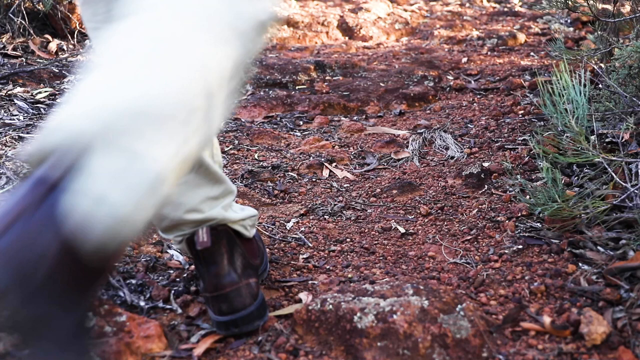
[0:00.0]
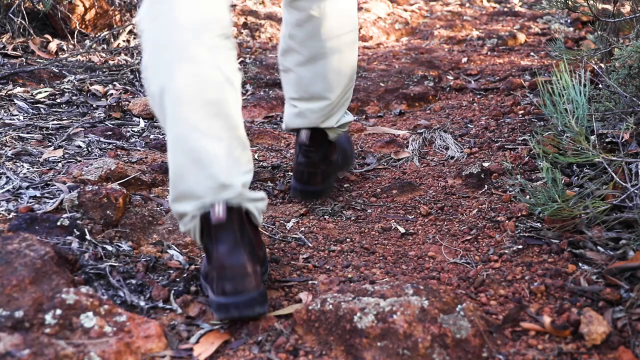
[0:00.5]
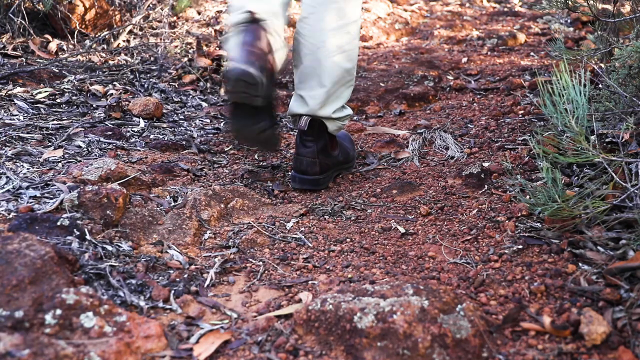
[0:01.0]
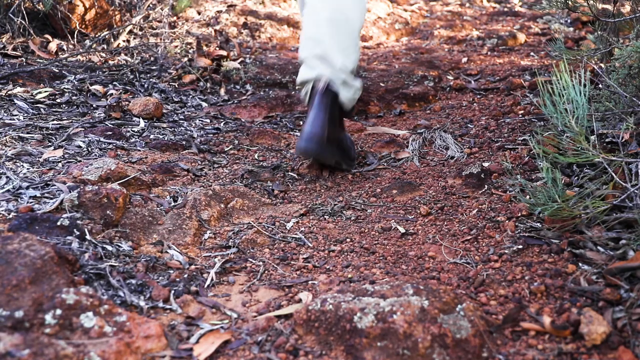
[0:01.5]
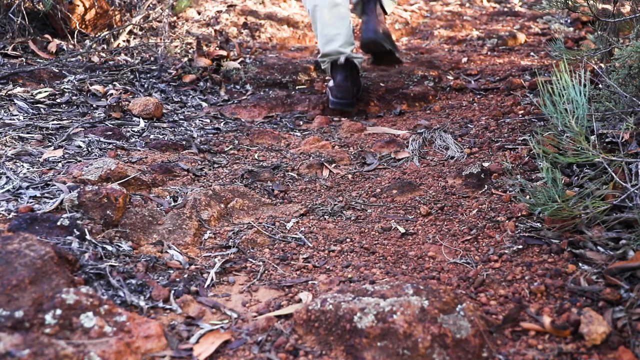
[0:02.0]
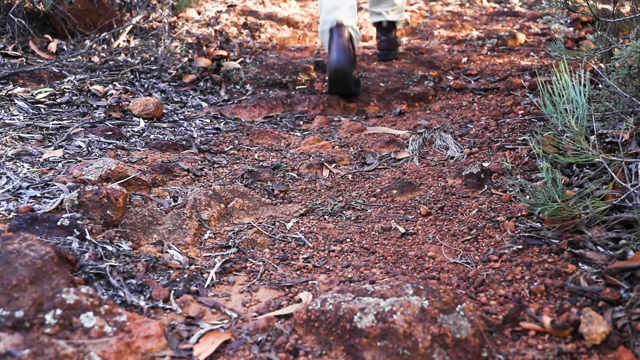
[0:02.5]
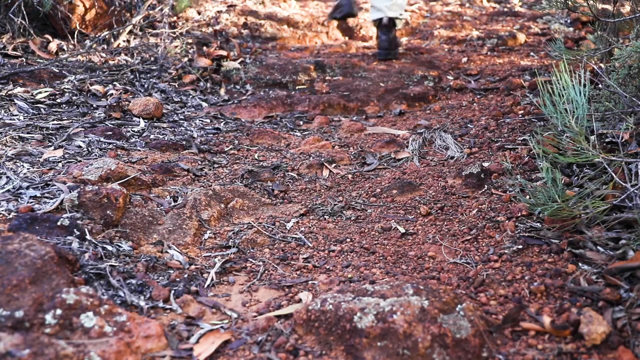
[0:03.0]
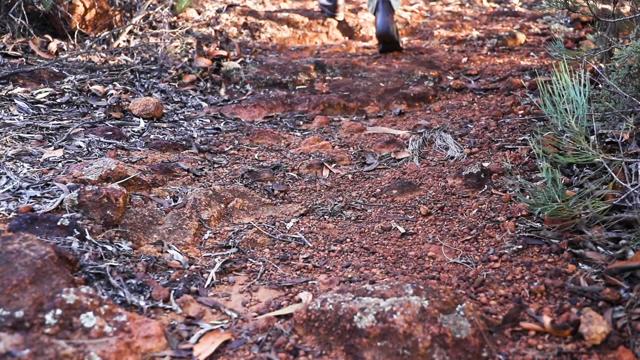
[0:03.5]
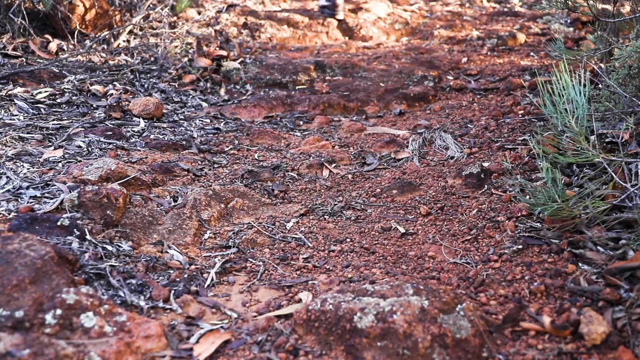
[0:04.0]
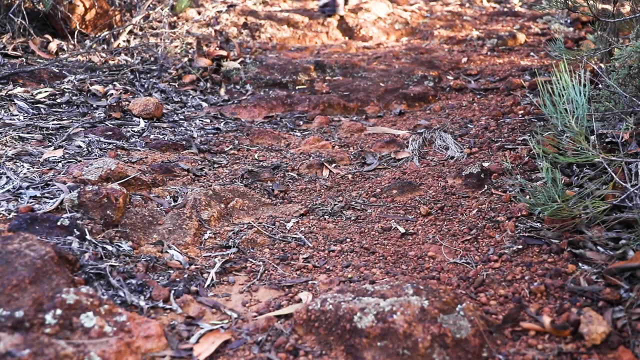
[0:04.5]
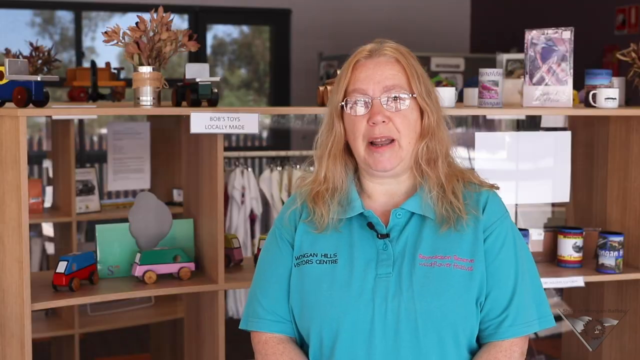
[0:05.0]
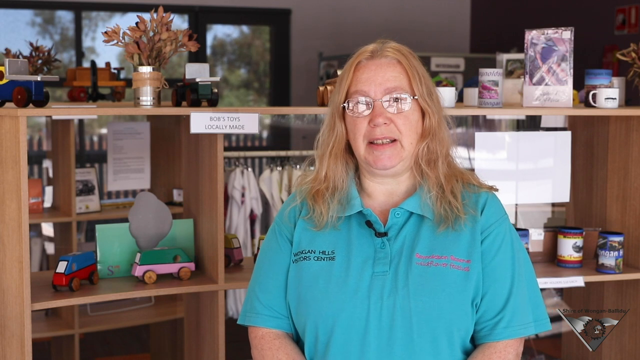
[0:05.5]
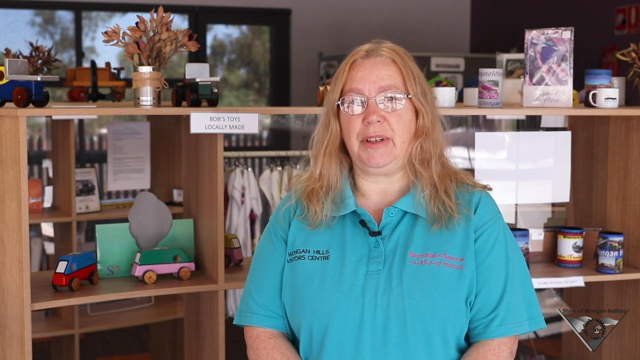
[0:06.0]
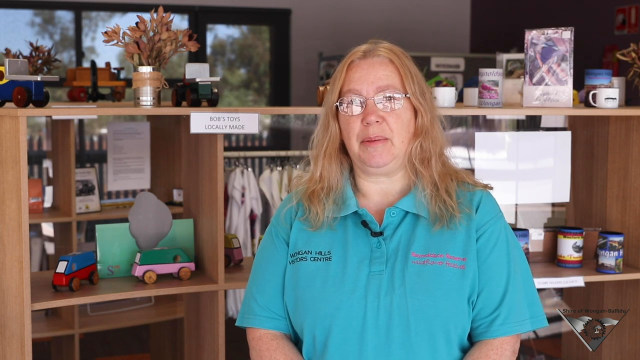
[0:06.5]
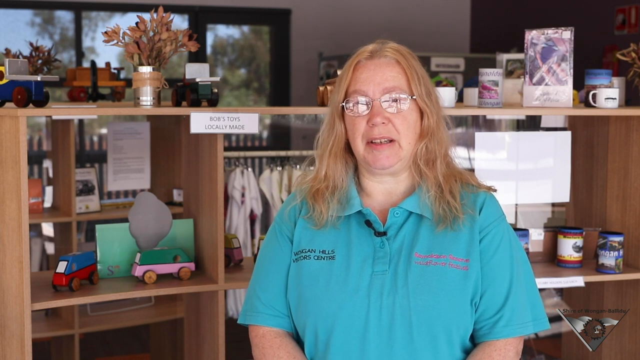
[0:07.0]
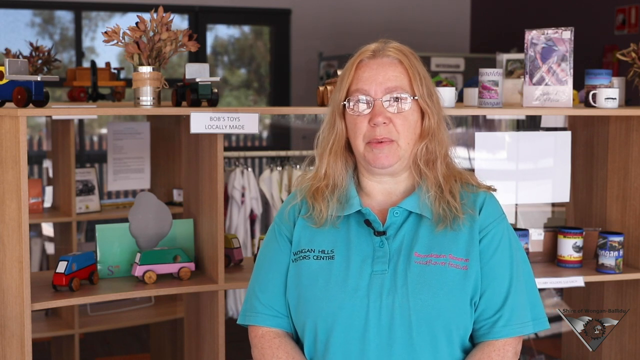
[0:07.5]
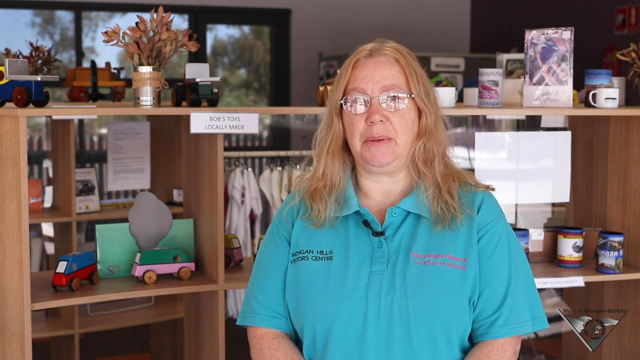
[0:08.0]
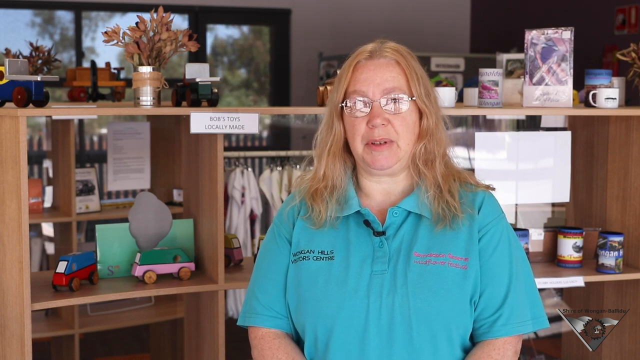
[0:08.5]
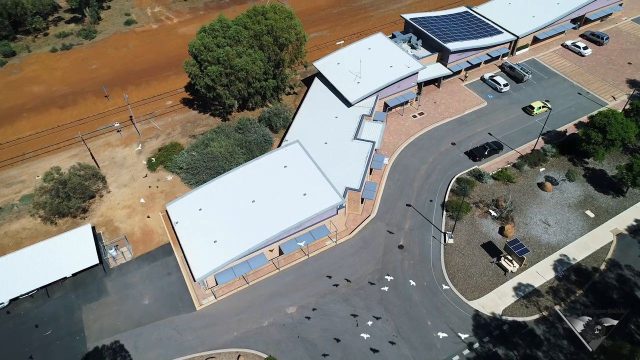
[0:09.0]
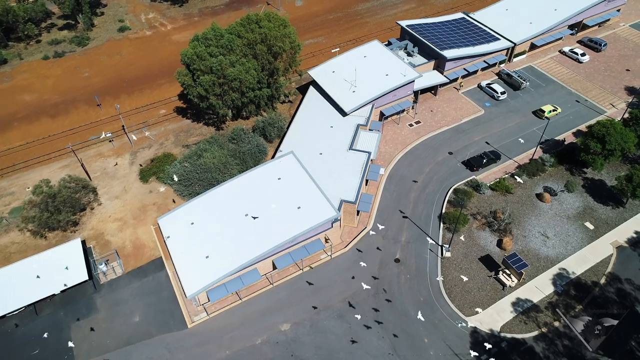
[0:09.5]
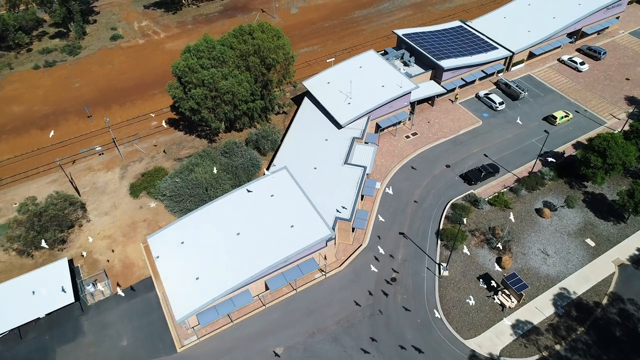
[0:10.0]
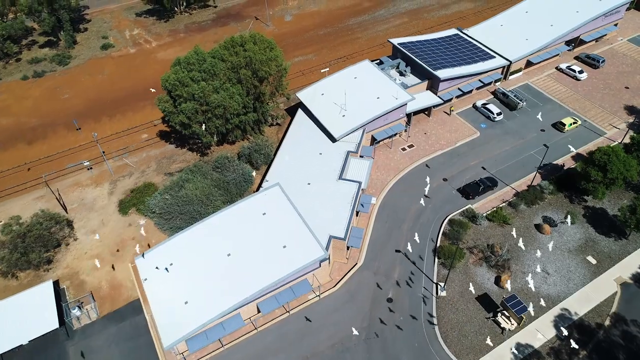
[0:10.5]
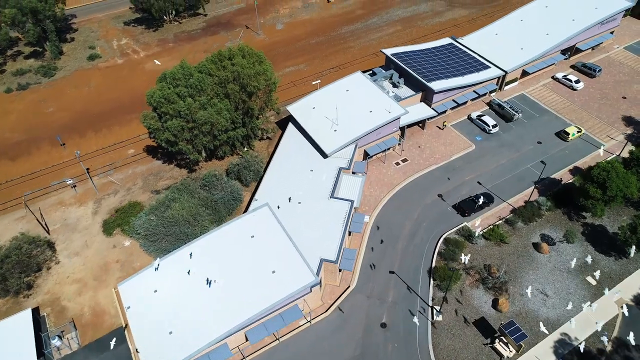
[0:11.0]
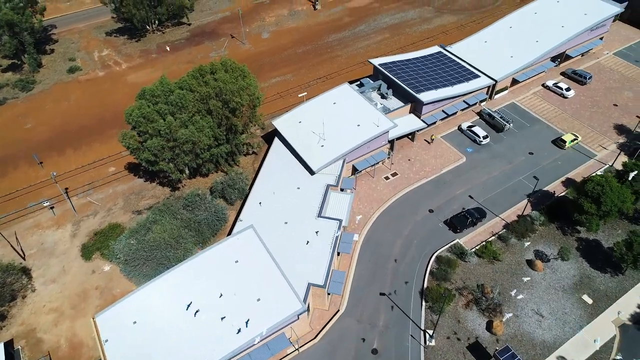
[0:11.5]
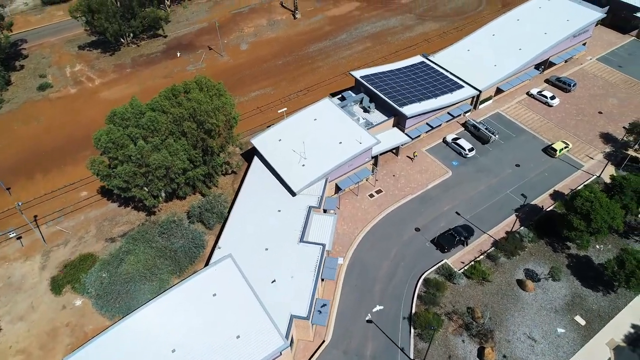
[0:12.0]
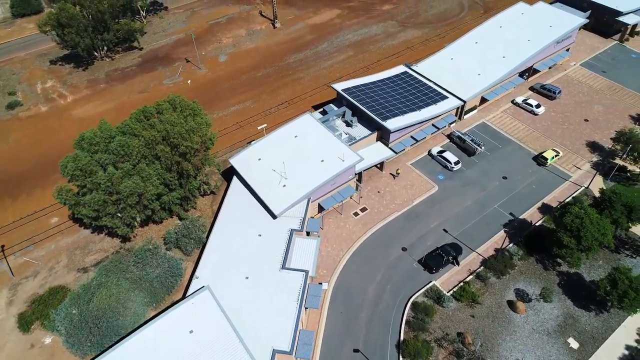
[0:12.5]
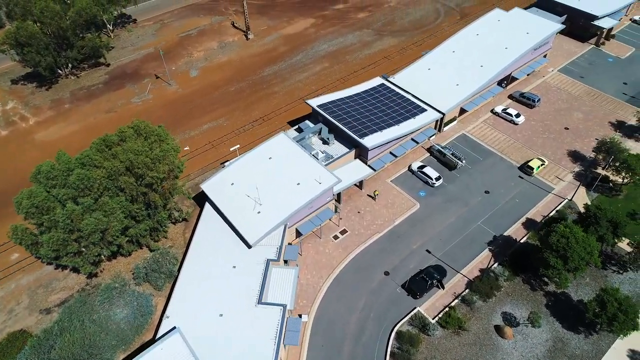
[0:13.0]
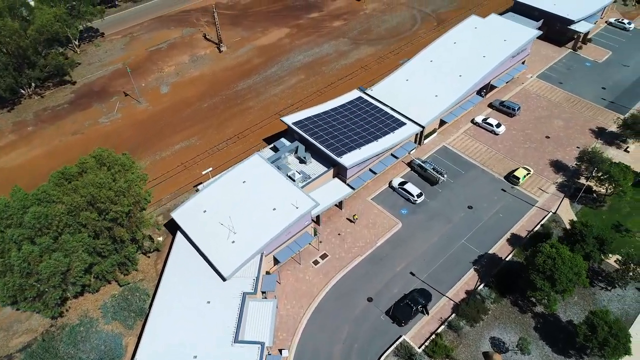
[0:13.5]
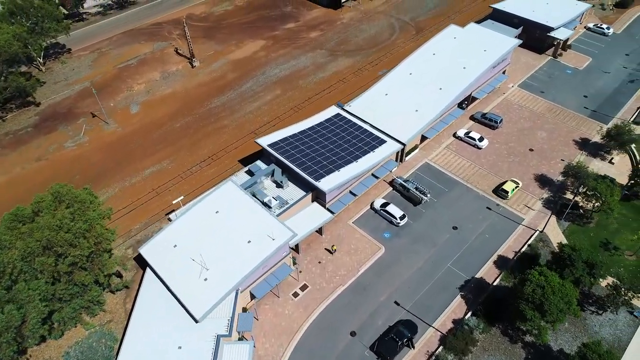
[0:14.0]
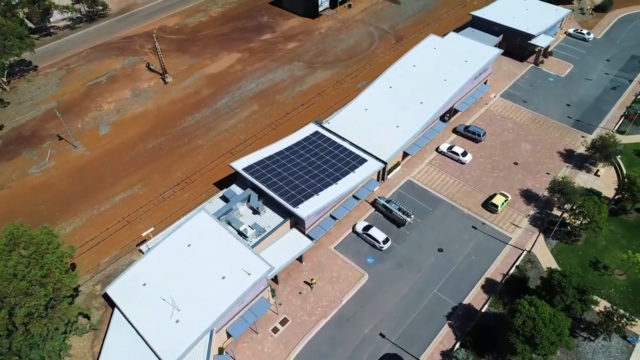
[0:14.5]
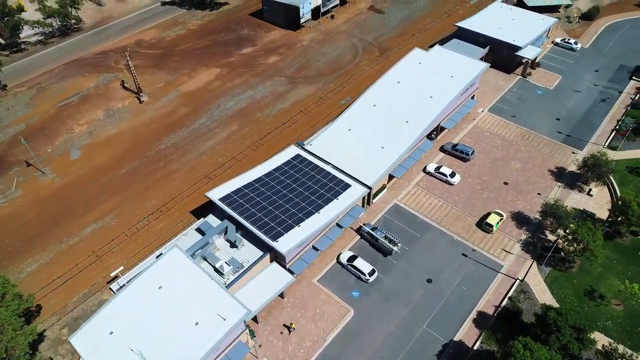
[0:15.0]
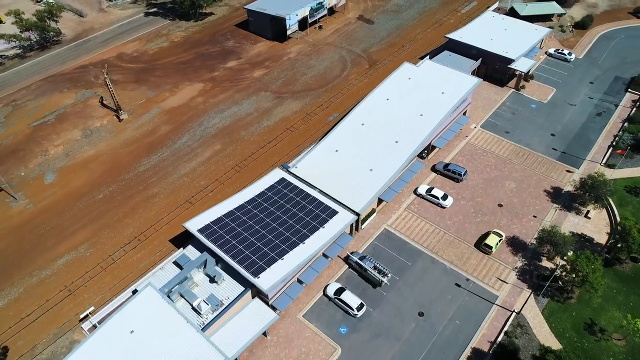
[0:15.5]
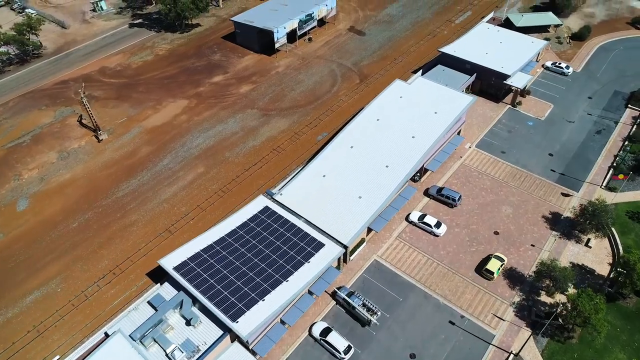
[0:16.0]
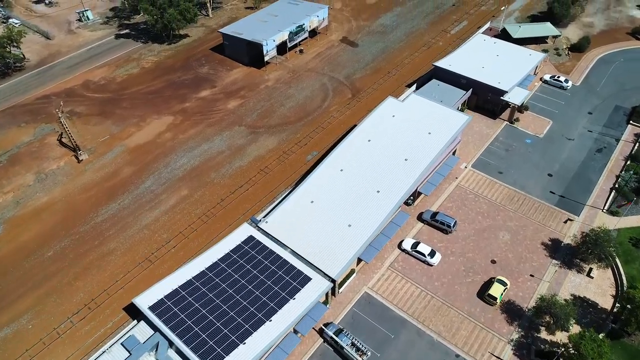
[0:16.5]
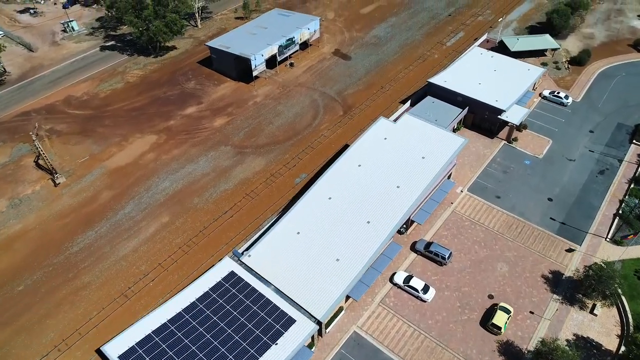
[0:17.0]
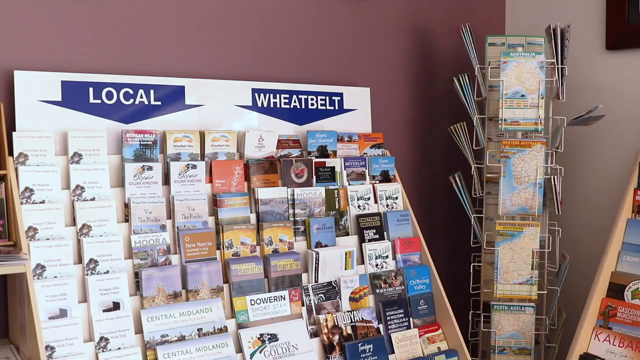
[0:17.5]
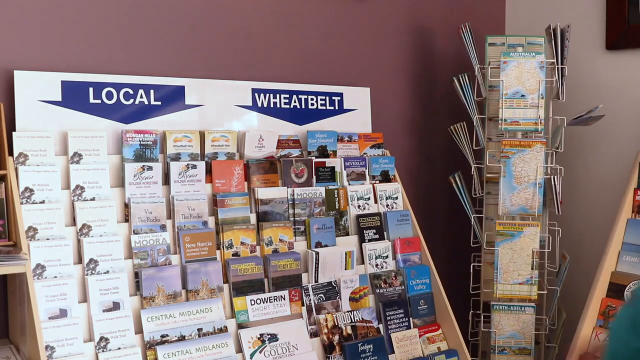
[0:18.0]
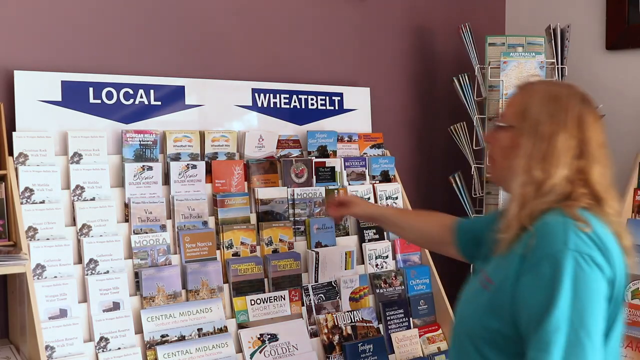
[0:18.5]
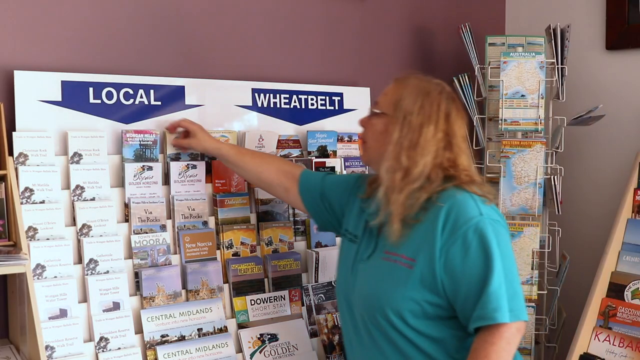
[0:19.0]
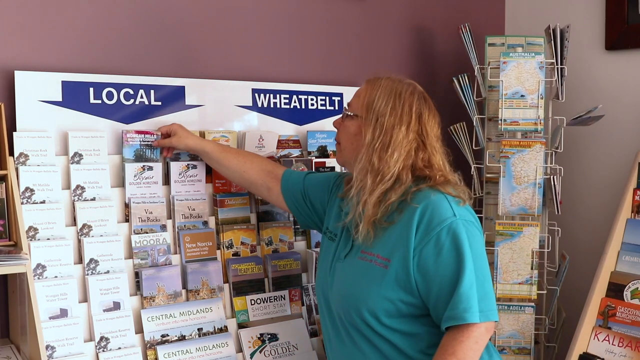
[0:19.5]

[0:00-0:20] A pair of feet walks away across the ground; the person is wearing what looks like a pair of Doc Martens and khaki pants. The shot cuts to a woman in an aqua teal shirt who is talking. She has glasses and long blonde hair, appears to be probably in her 40s or 50s, and is kind of heavyset. Her shirt says something about "Hills Visitor Center". An overhead aerial view follows, showing some sort of building complex and parking lot, presumably the visitor center. The video then returns to the woman, who walks over to a rack of brochures and pulls a brochure out.